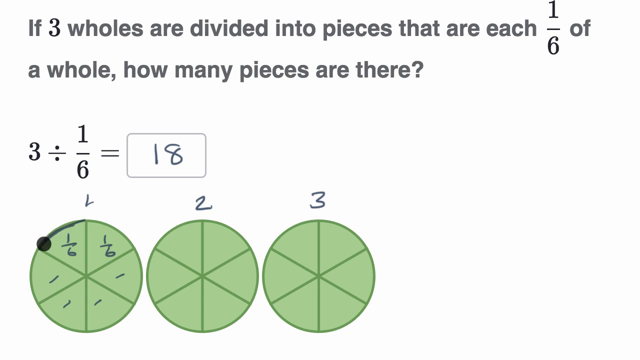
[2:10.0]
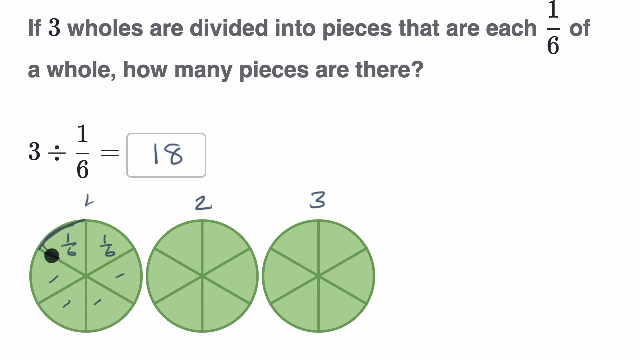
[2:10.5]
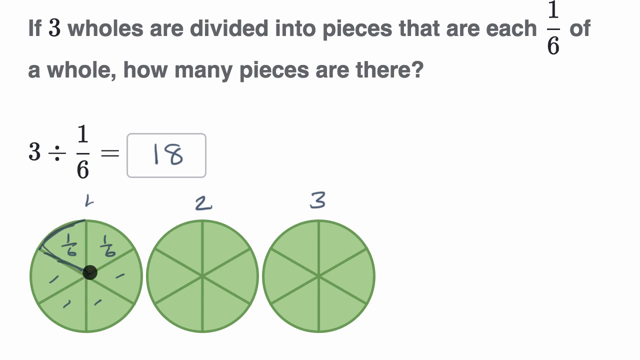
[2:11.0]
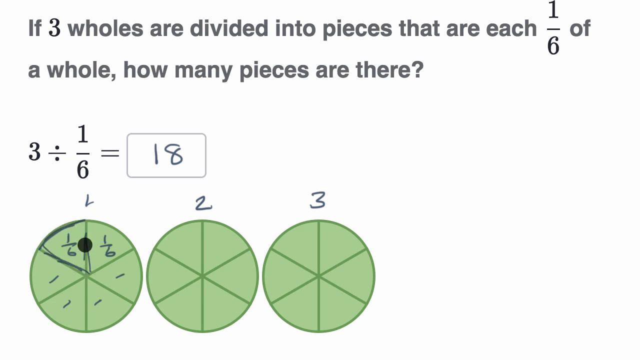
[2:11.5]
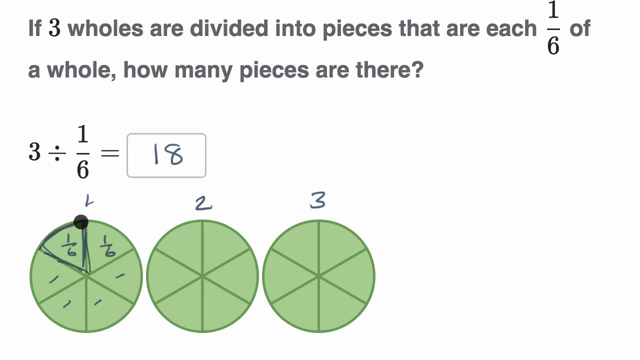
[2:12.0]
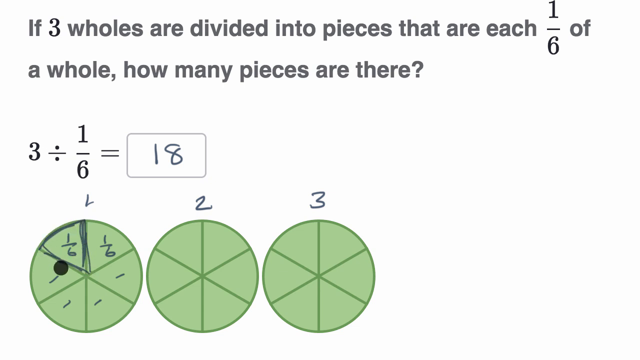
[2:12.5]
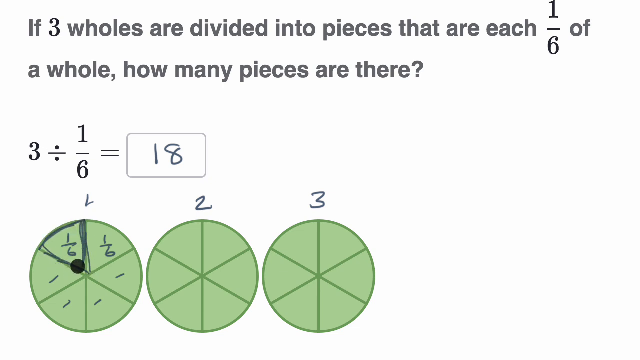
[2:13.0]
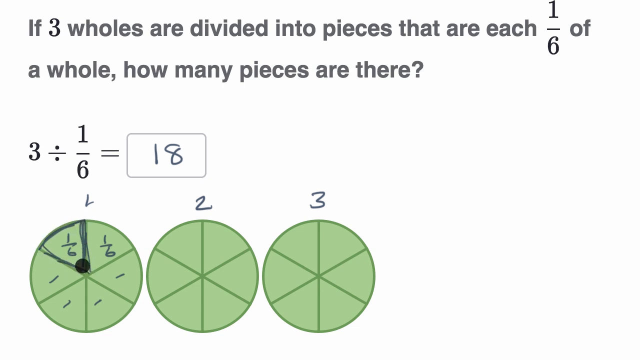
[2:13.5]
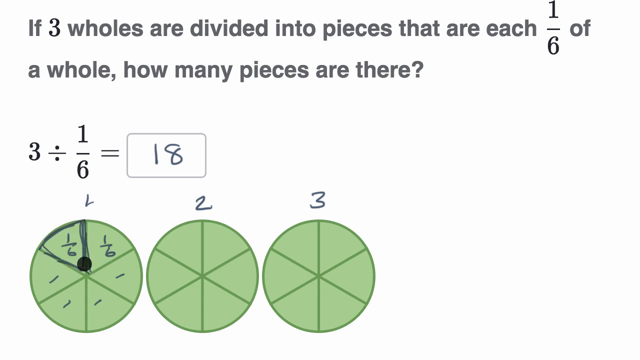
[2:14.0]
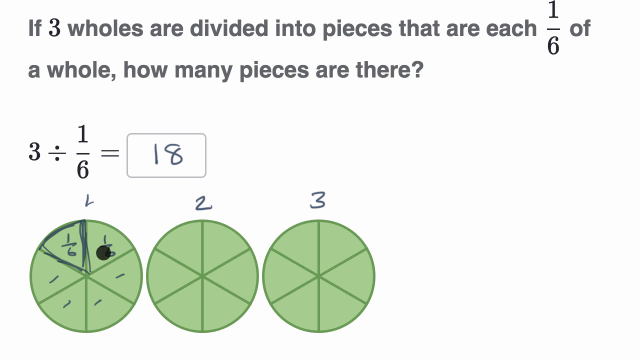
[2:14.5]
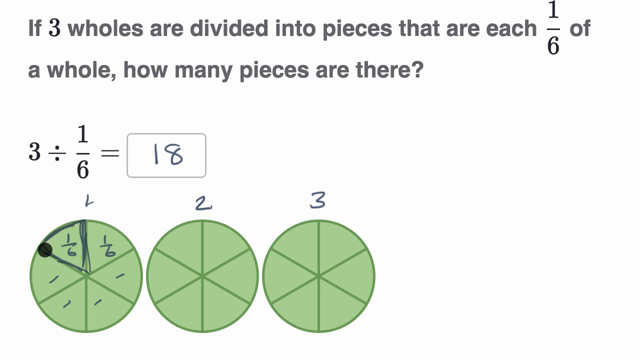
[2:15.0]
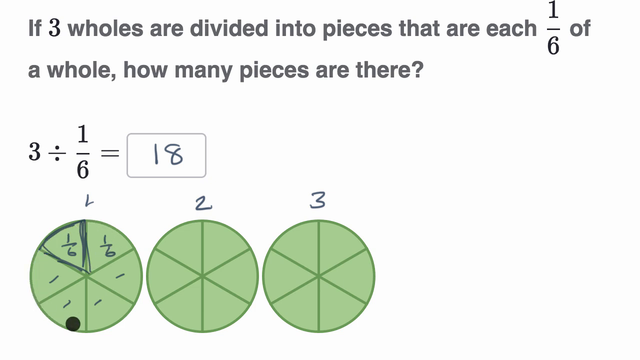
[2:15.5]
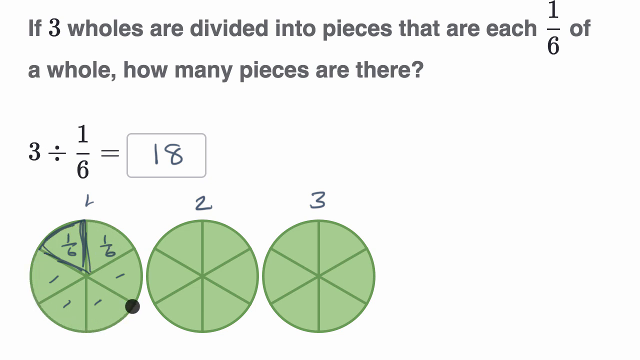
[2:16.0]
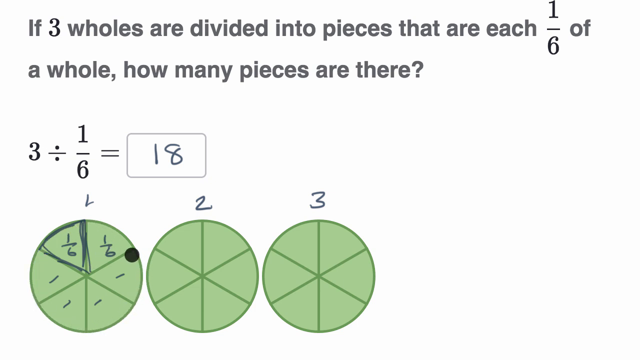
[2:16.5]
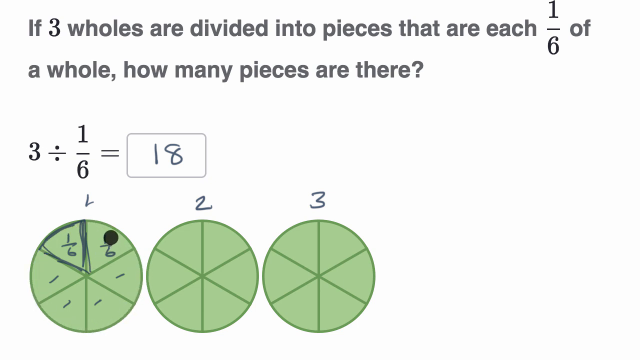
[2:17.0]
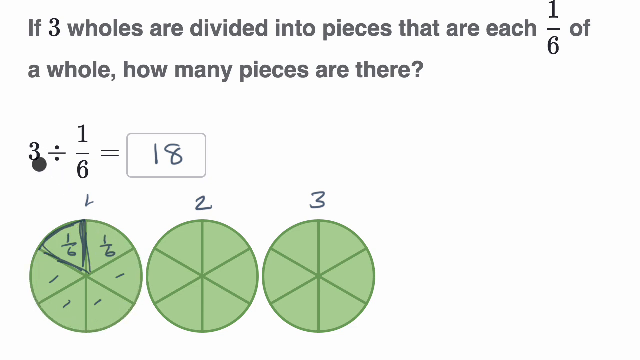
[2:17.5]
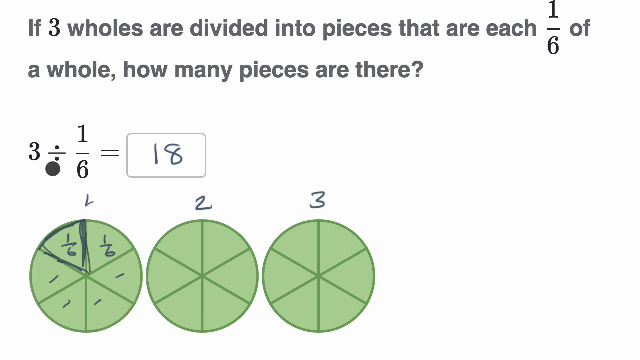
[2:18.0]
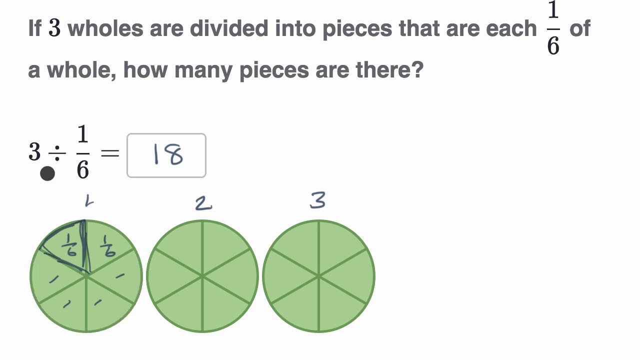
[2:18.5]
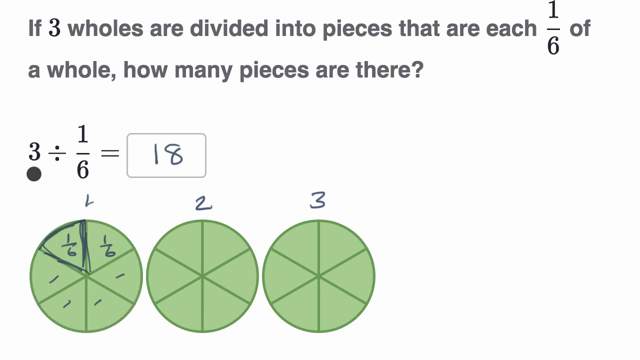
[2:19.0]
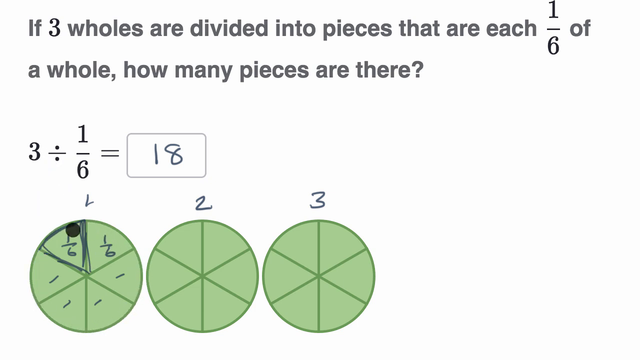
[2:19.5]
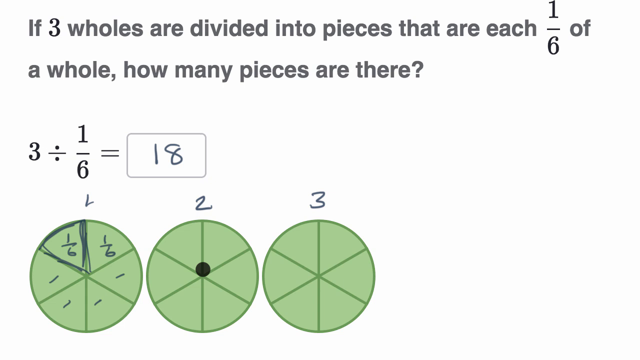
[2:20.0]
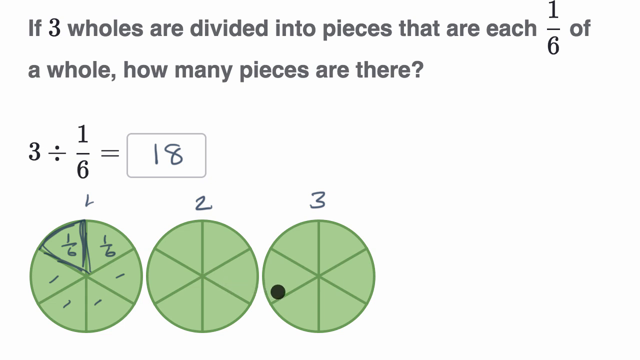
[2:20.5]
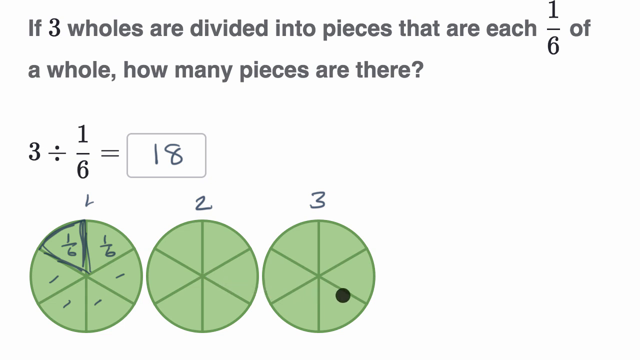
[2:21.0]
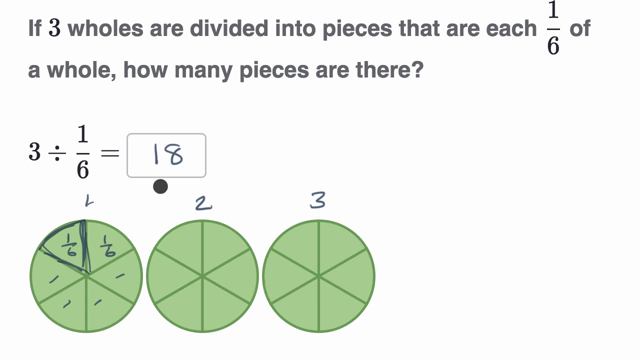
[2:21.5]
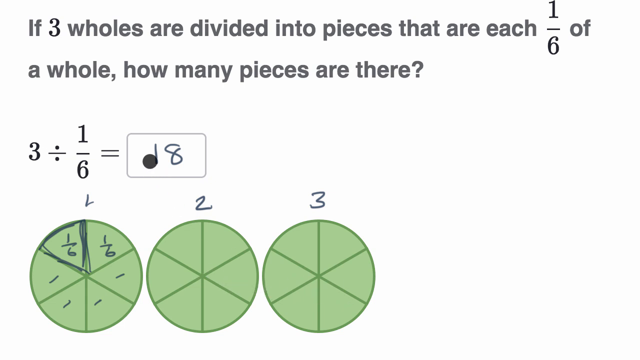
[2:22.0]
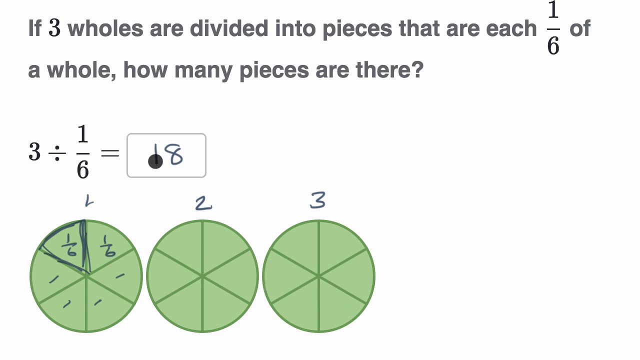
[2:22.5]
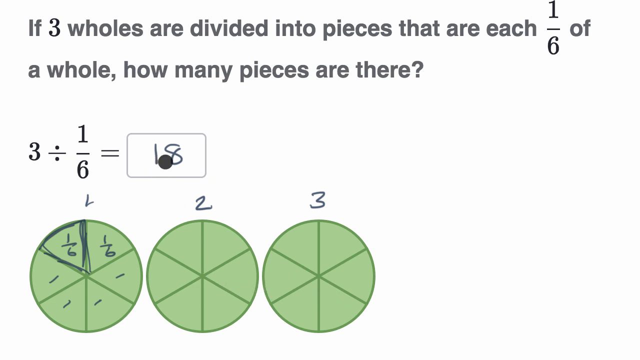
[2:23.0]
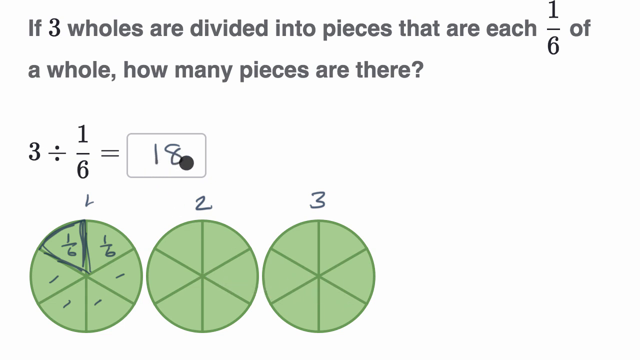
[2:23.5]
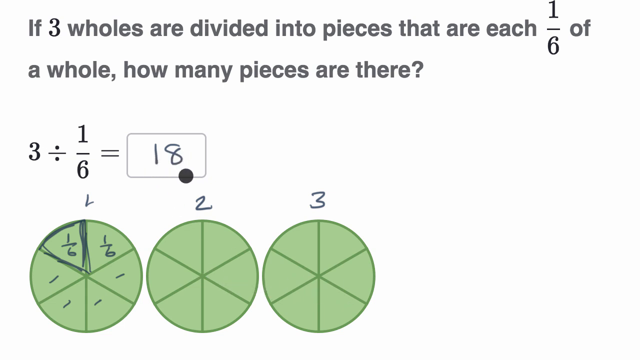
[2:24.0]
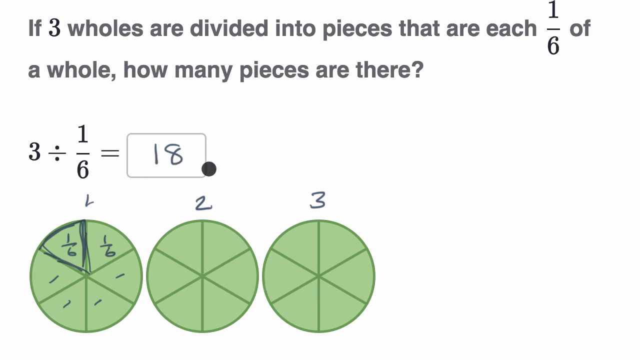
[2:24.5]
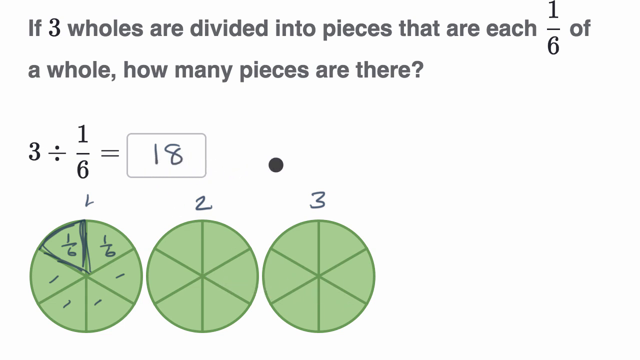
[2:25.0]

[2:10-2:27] On a white background are gray text at the top, an equation with a text entry box to its right containing a drawn 18 in the middle on the left side, and three green circles divided into six sections each beneath. The numbers 1, 2 and 3 are drawn over the leftmost, middle and rightmost green circles respectively. In the leftmost circle, 1/6 is drawn in the upper left and upper right sections, and a short diagonal line is drawn in each of the four remaining sections. The circular grey cursor is on the upper left side of the leftmost circle and highlights the walls of its upper left section in grey. The cursor is dragged down and around the leftmost circle counterclockwise, then up and to the left to hover over the 3 in the equation "3 ÷ by 1/6 =". It is dragged down and to the right through the middle and rightmost green circles, then up and to the left to hover over the 18 in the text entry box, and finally moves to the right of the text entry box.